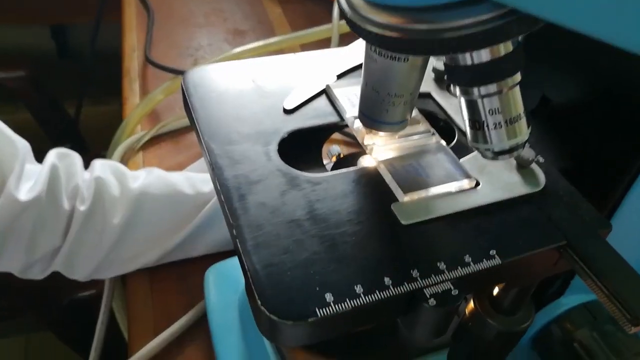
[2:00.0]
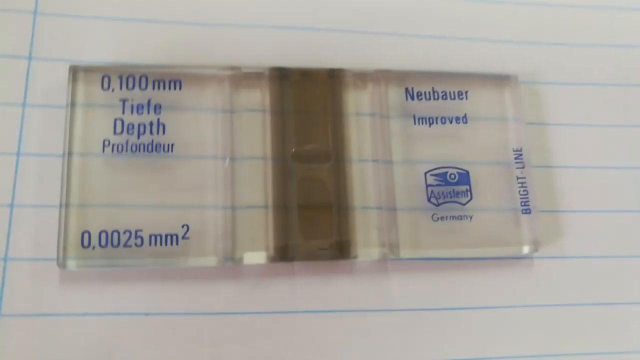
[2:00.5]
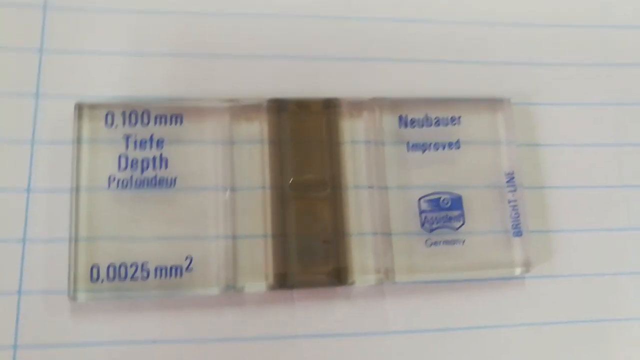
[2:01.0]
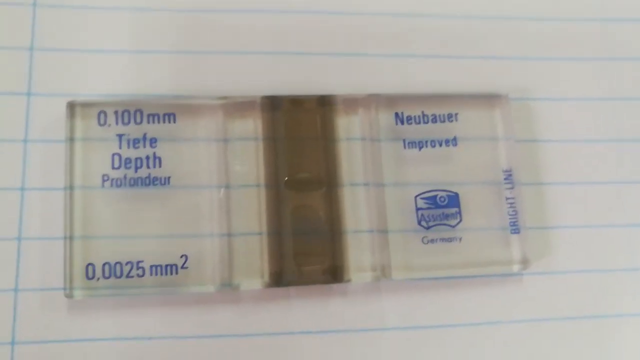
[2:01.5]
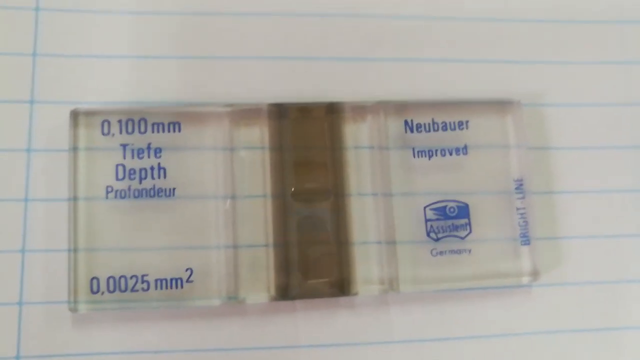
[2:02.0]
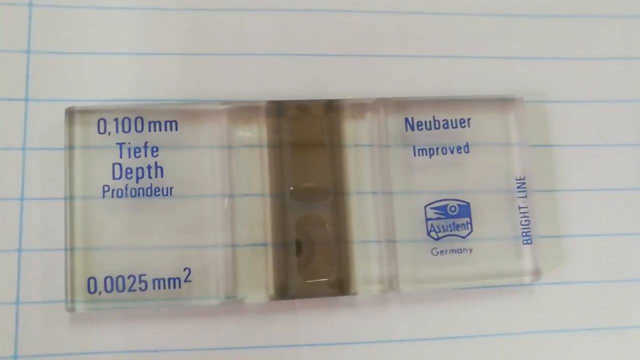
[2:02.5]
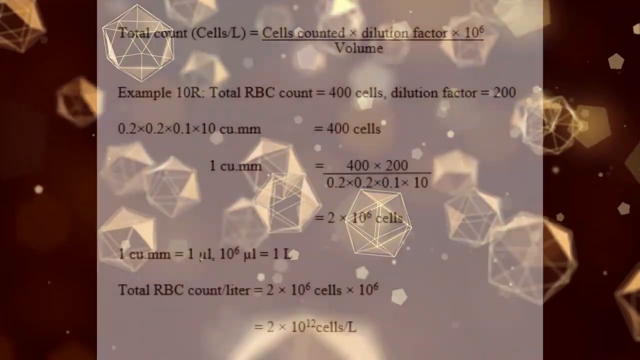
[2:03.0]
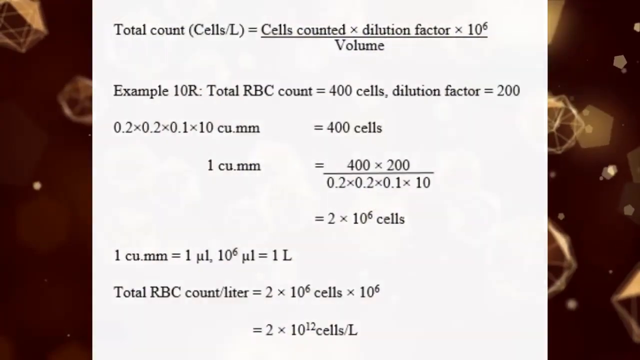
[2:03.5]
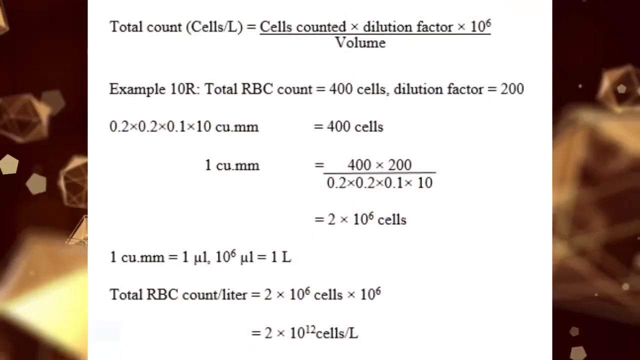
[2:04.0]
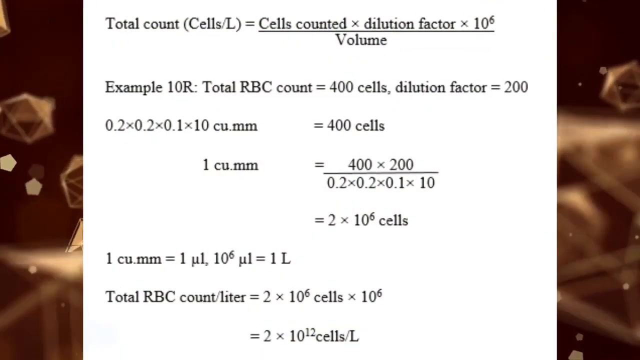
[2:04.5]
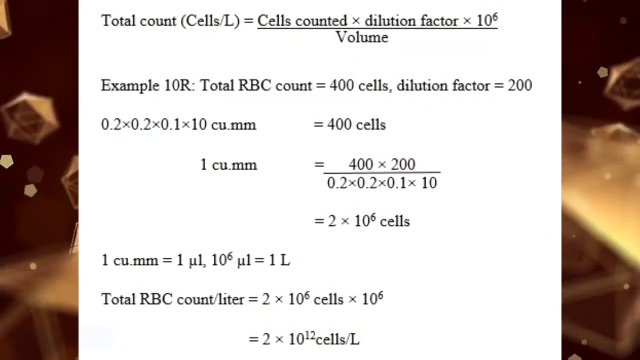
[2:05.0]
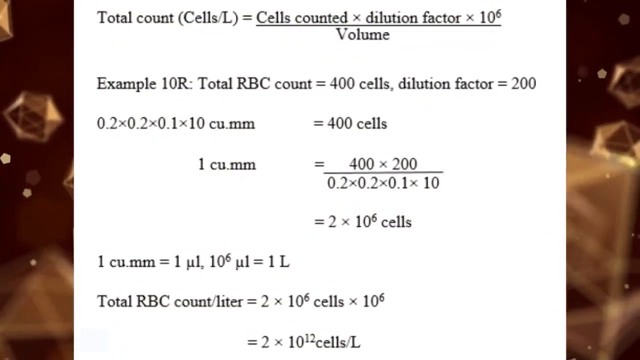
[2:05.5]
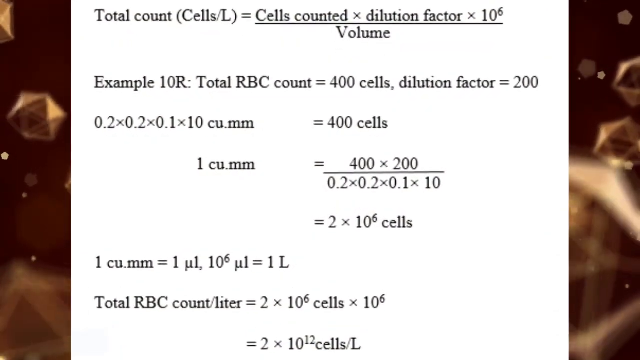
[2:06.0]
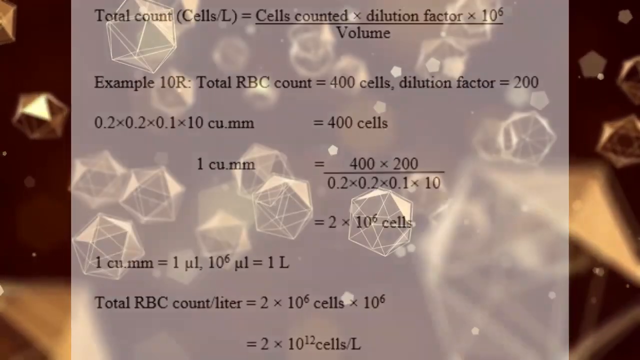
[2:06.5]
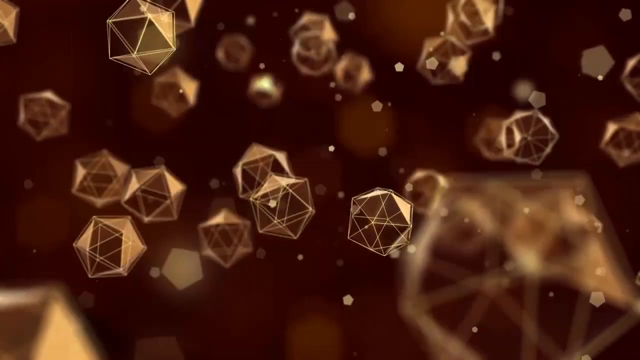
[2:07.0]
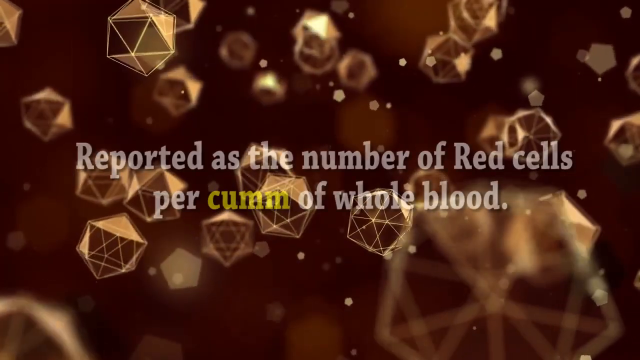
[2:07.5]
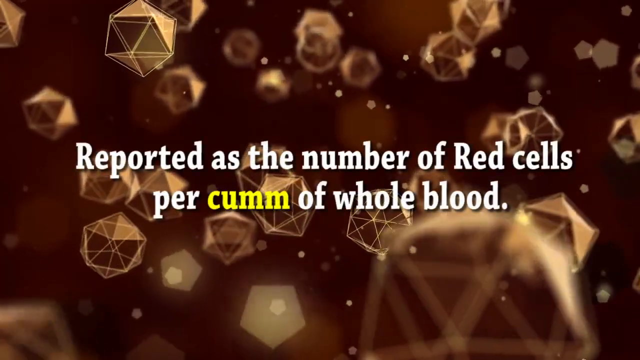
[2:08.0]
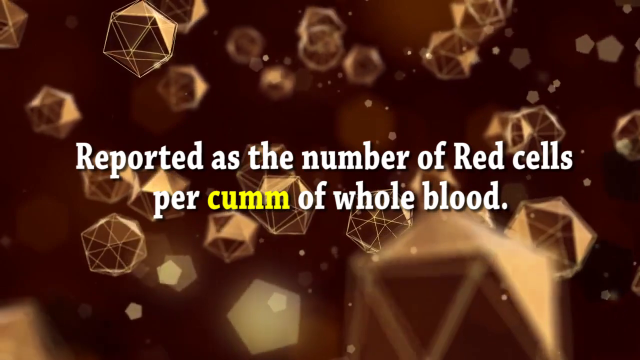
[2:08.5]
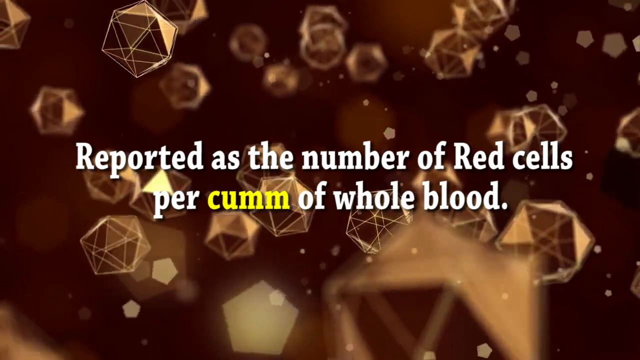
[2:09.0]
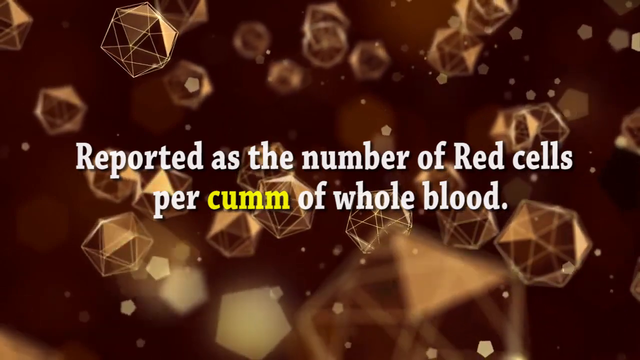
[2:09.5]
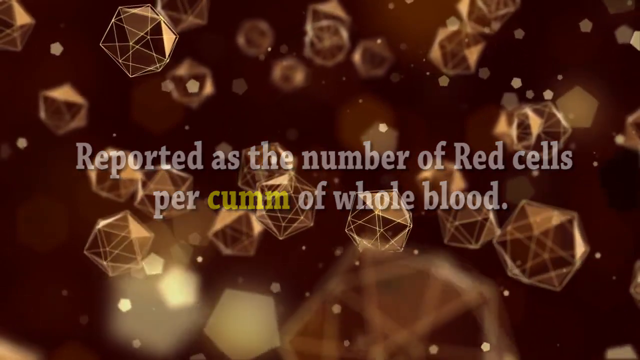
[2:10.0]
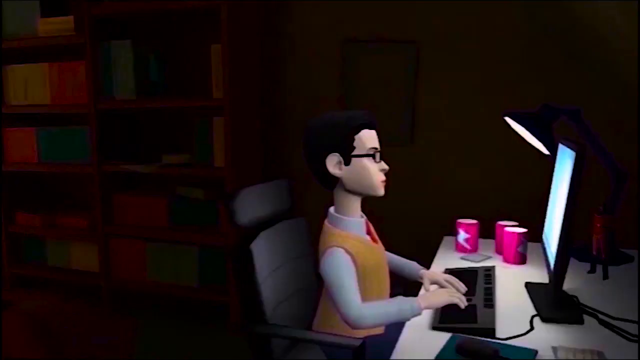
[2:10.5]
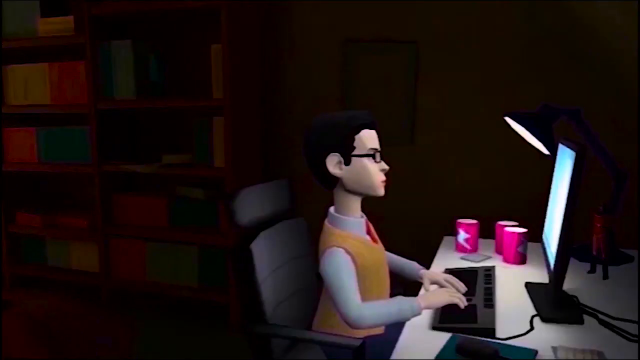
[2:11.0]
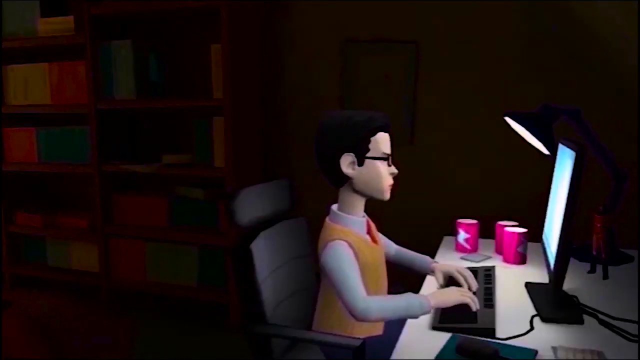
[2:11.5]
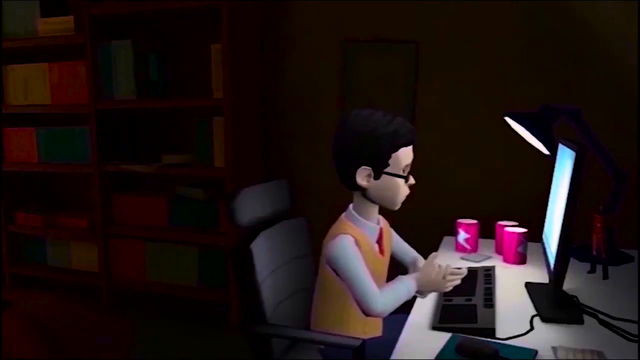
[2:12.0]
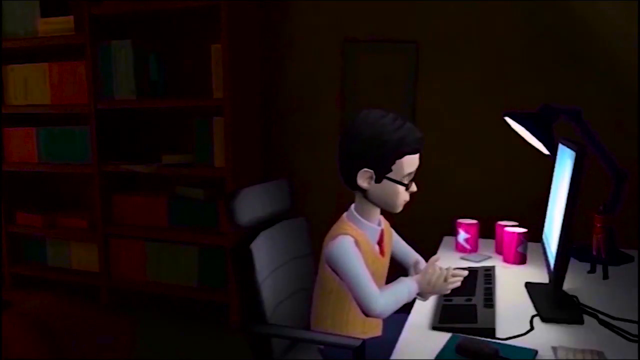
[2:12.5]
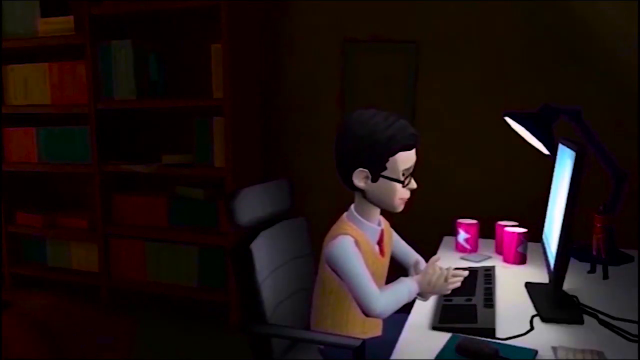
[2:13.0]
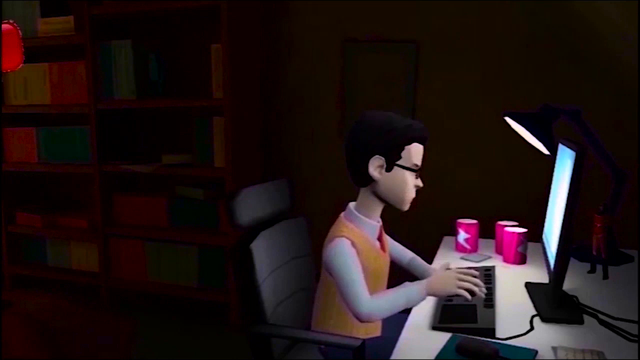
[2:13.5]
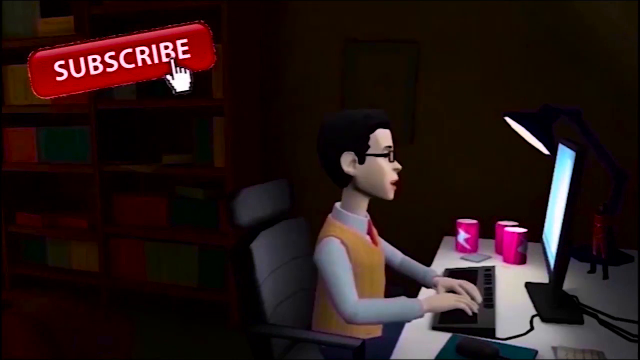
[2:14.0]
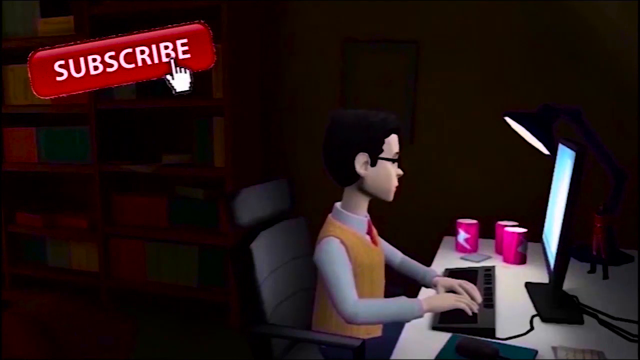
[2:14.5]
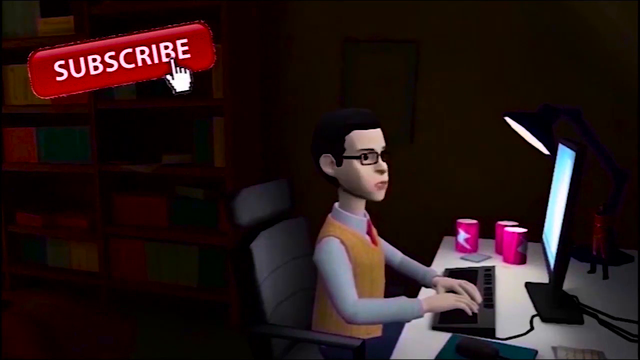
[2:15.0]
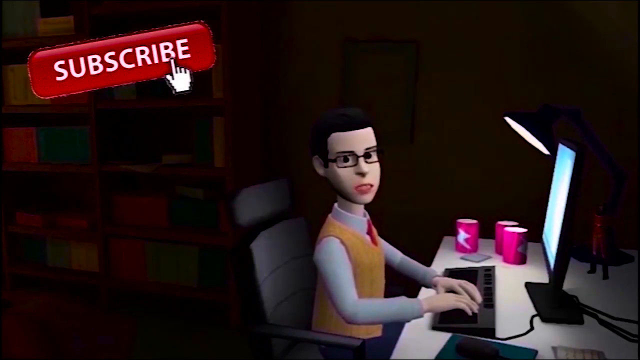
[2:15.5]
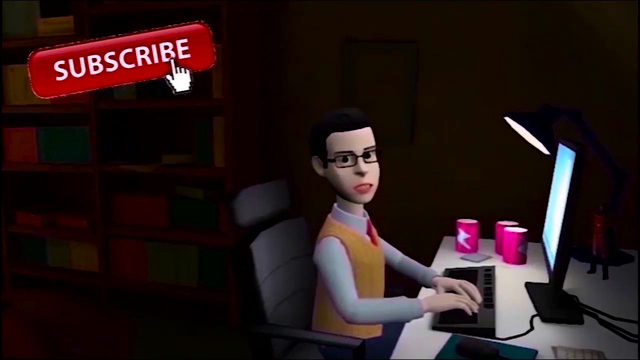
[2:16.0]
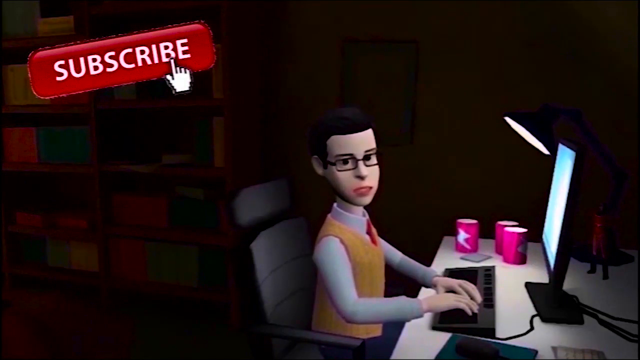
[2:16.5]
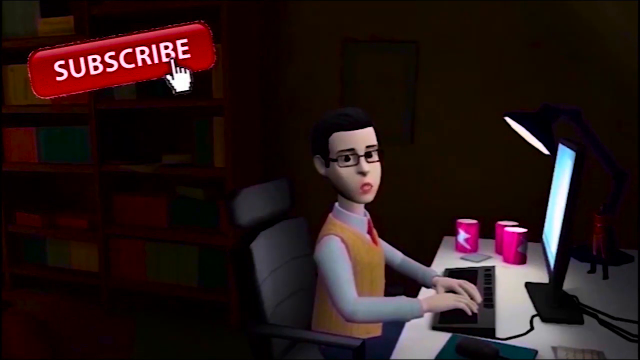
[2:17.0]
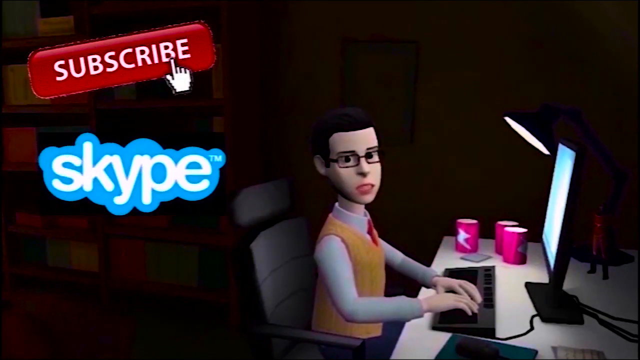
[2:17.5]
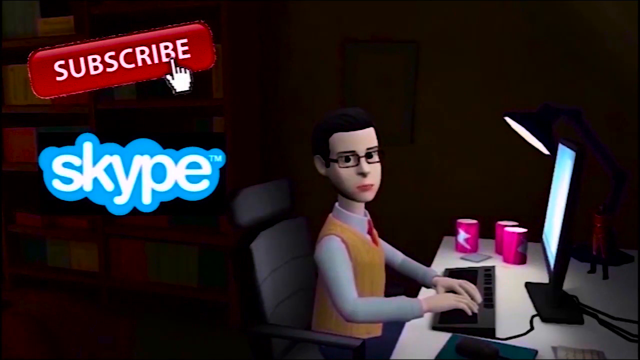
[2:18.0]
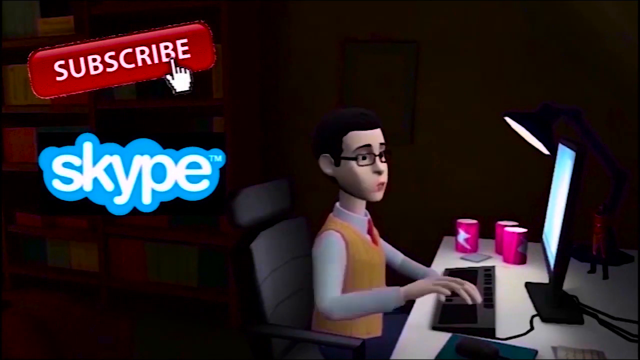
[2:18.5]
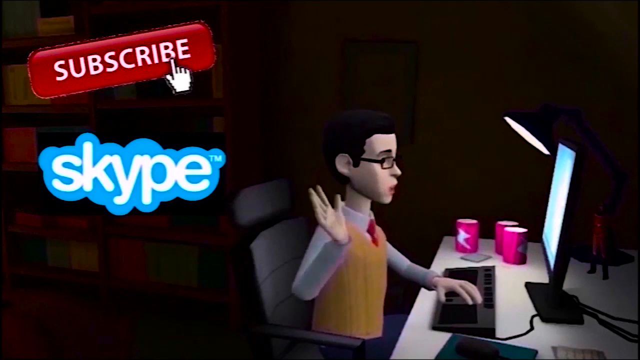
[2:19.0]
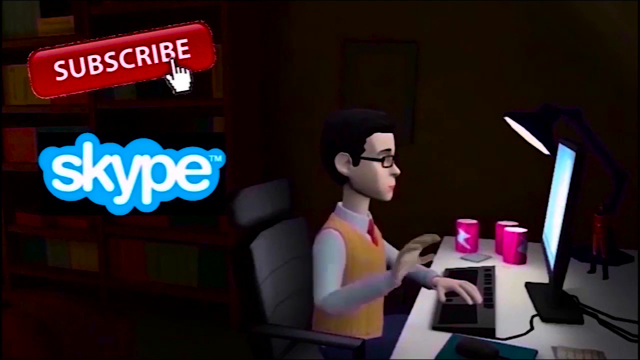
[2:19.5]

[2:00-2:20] A person uses a microscope and seems to be looking at something. A small capsule with a label appears, and some kind of liquid is stored in a kind of plate. An equation for the total count of cells appears, setting it equal to the cell volume plus the dilution factor and the cell unit multiplied by other terms, and the equation seems to be worked through until the total RBC count equals some number of cells. The equation changes, and text states that this is reported as "the number of red cells per cuMM of whole blood". Then an animation of a man in front of a PC appears; he seems to be the animator.